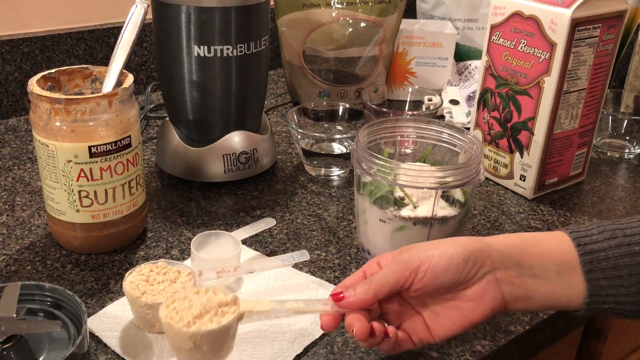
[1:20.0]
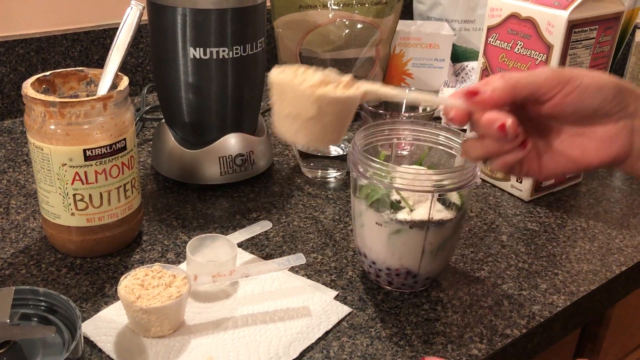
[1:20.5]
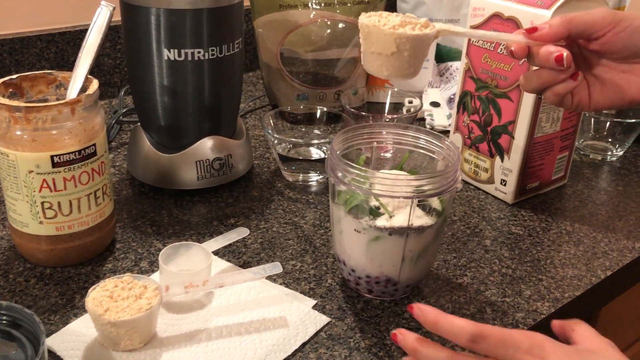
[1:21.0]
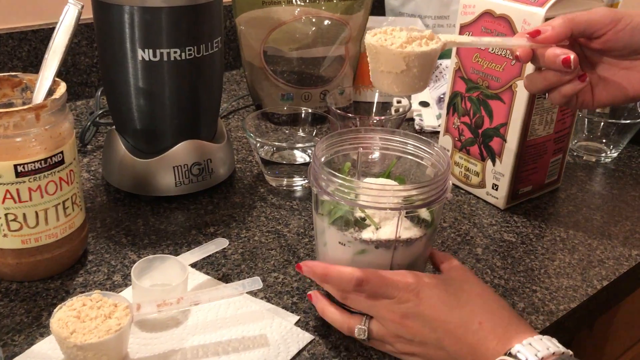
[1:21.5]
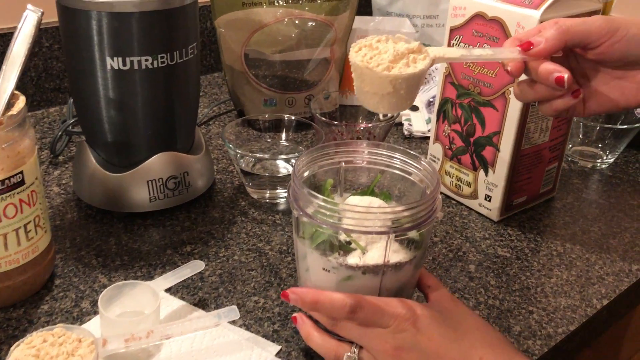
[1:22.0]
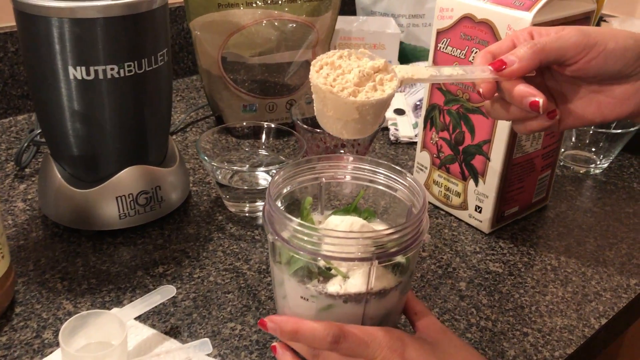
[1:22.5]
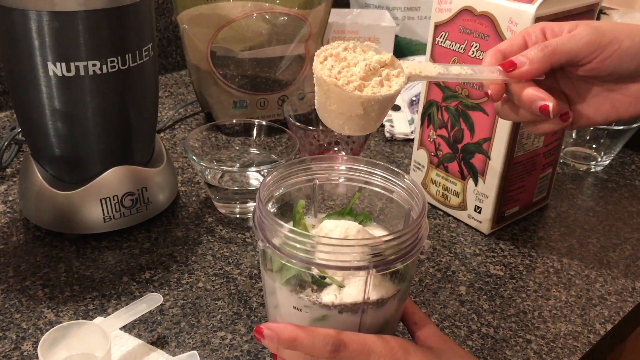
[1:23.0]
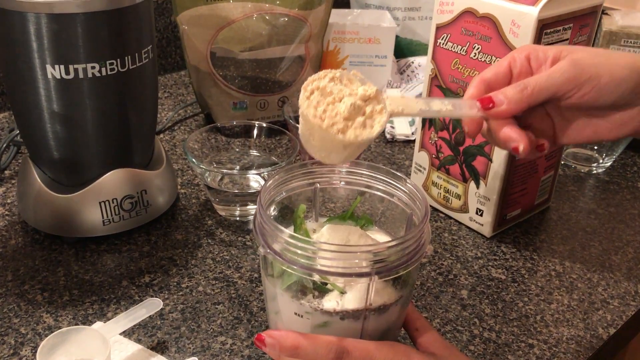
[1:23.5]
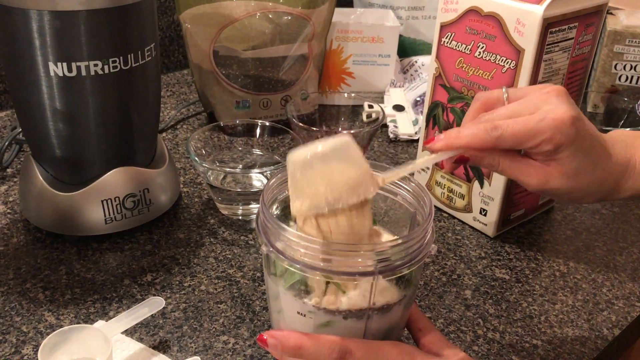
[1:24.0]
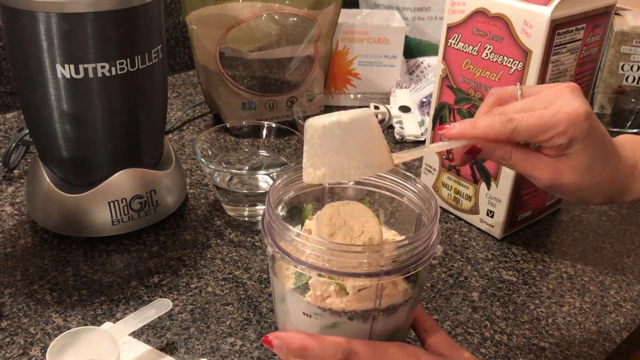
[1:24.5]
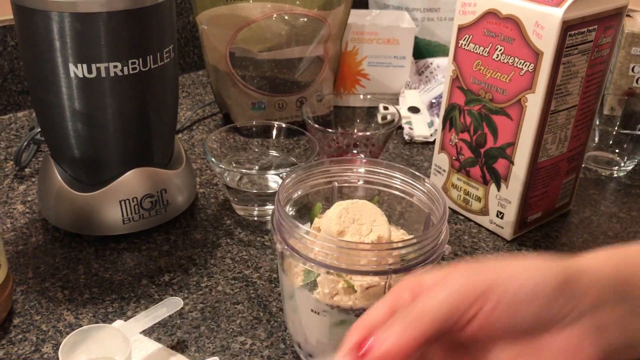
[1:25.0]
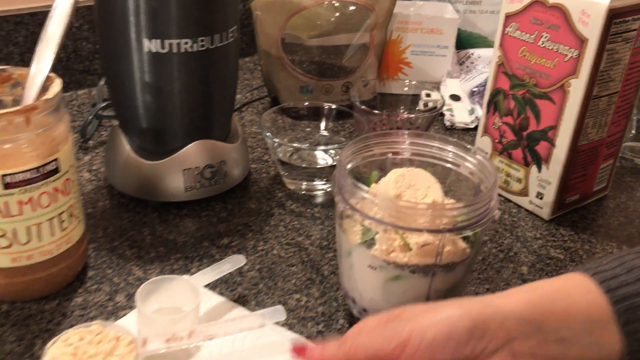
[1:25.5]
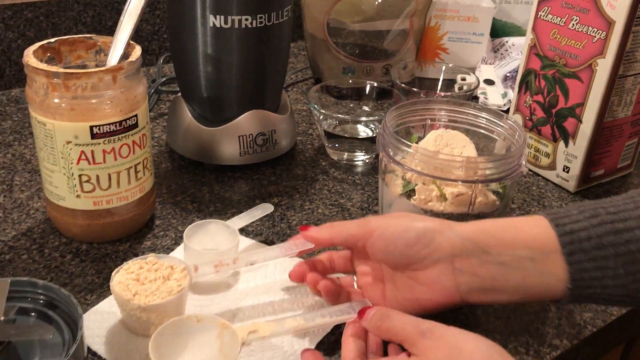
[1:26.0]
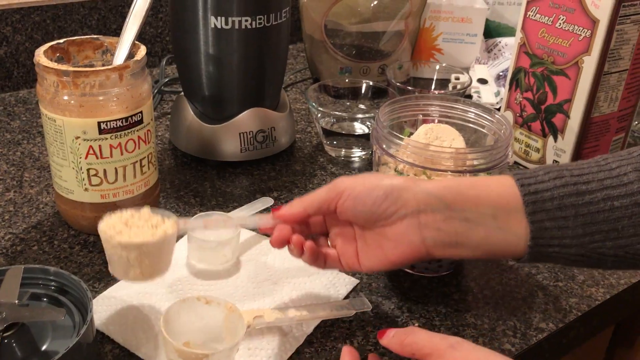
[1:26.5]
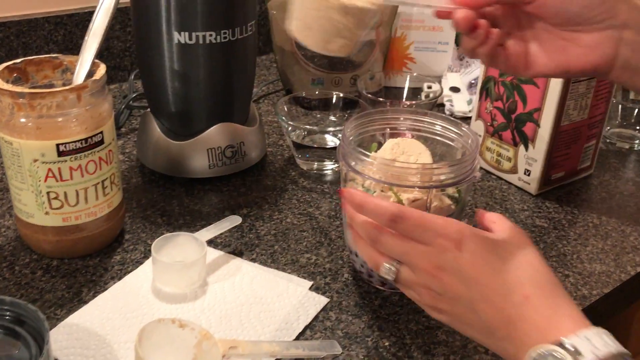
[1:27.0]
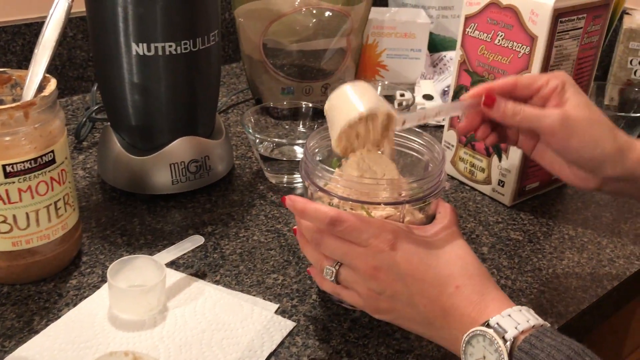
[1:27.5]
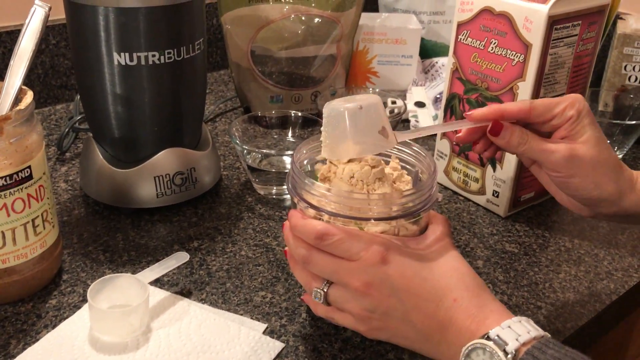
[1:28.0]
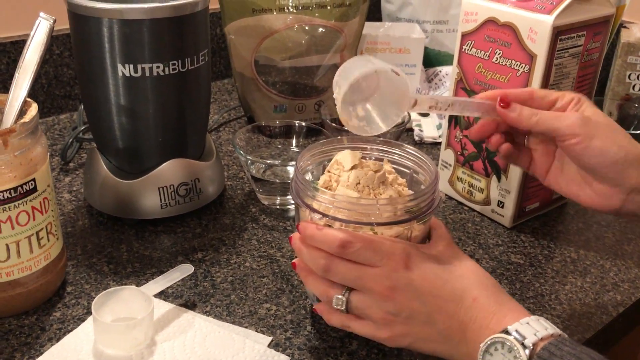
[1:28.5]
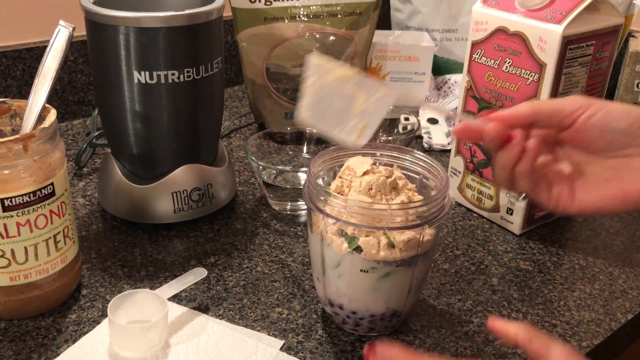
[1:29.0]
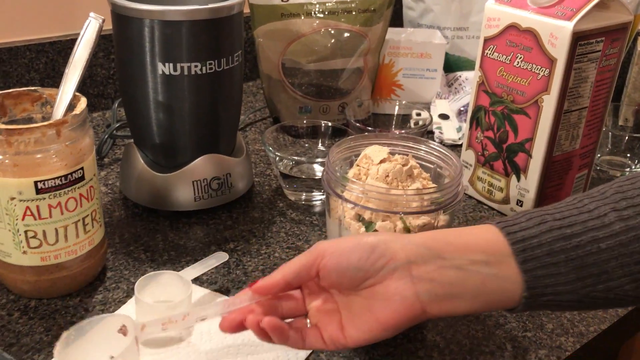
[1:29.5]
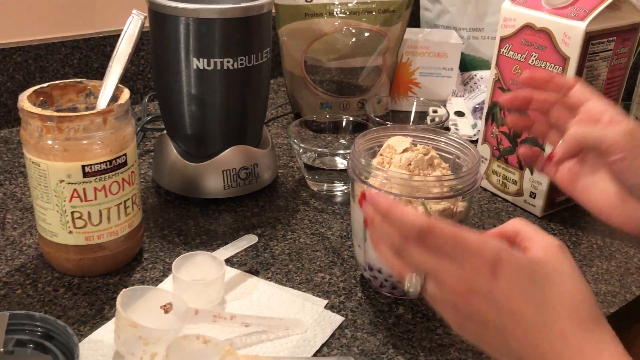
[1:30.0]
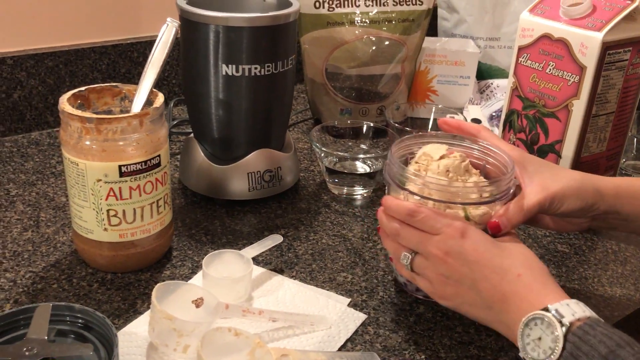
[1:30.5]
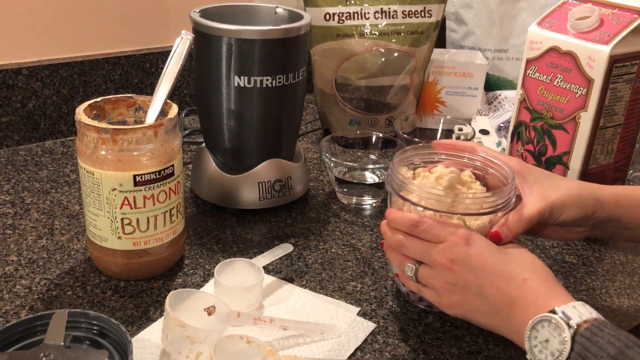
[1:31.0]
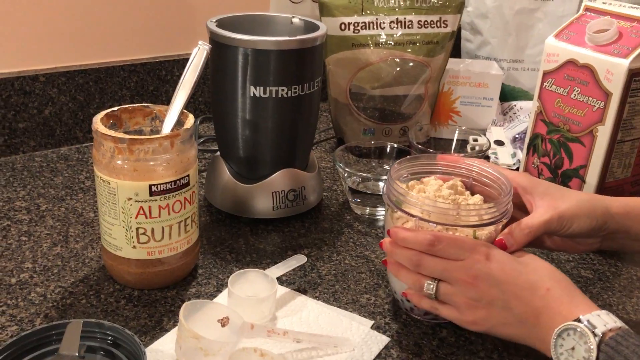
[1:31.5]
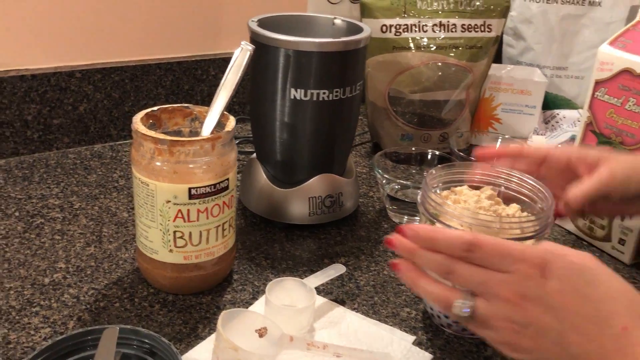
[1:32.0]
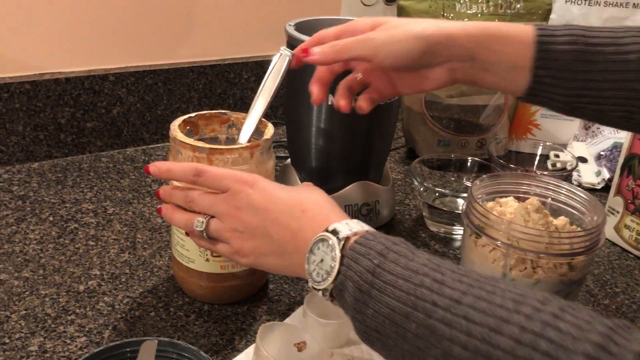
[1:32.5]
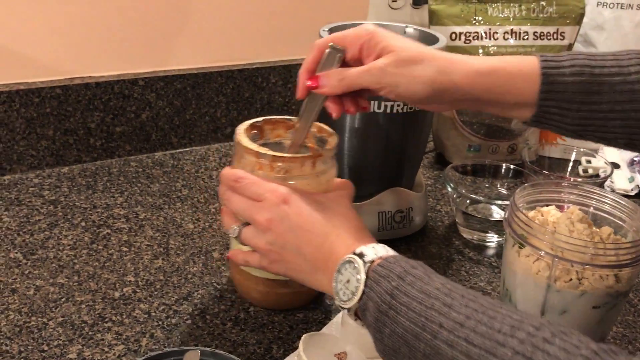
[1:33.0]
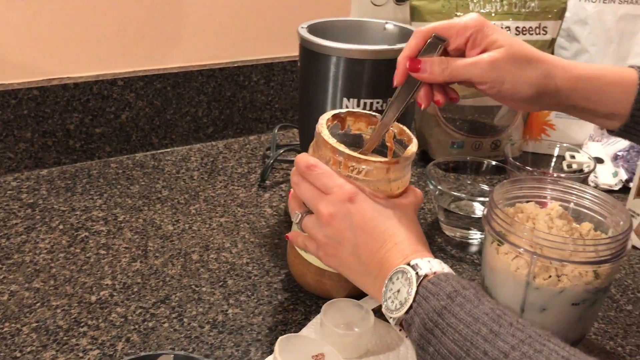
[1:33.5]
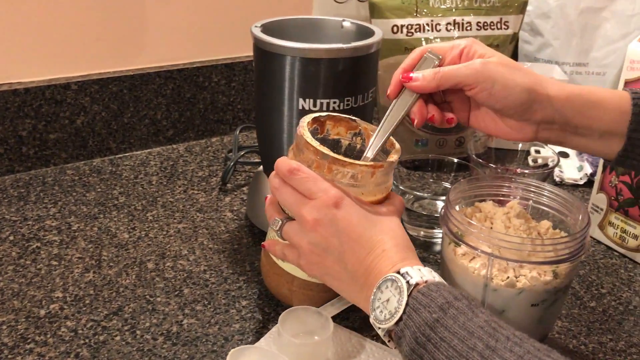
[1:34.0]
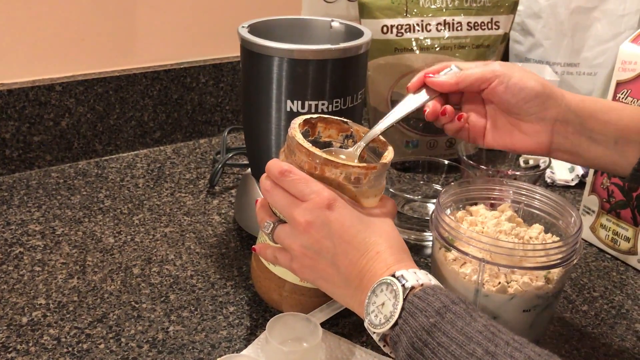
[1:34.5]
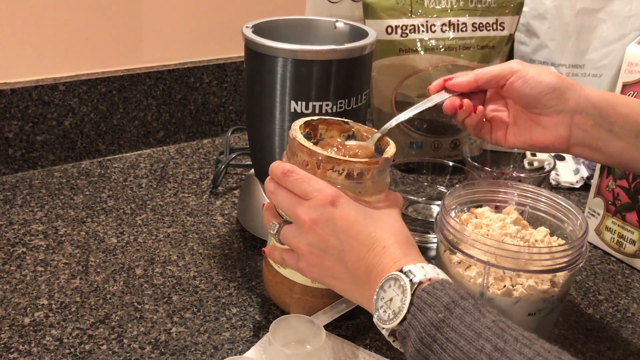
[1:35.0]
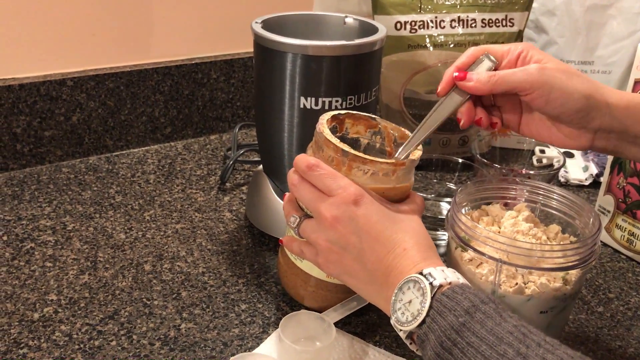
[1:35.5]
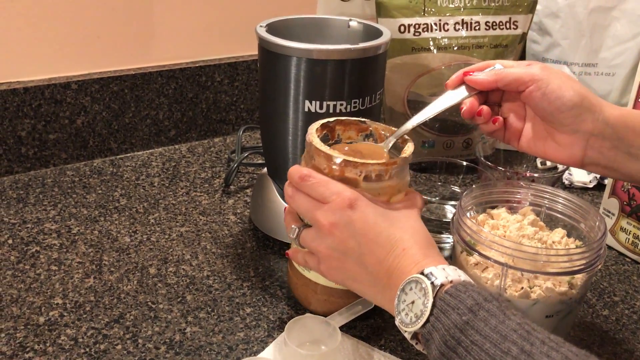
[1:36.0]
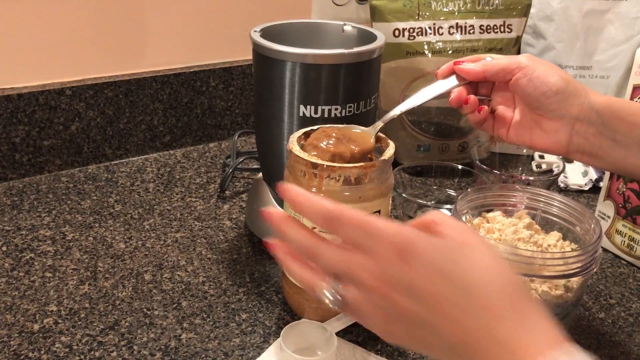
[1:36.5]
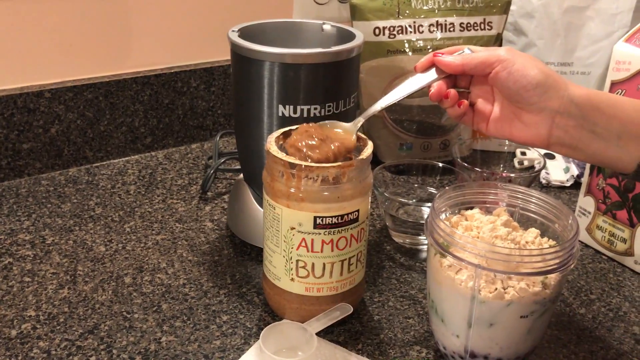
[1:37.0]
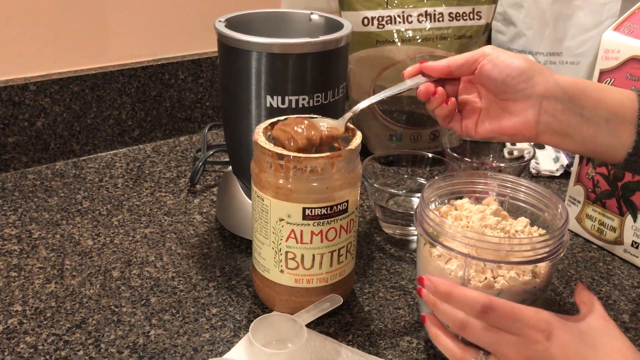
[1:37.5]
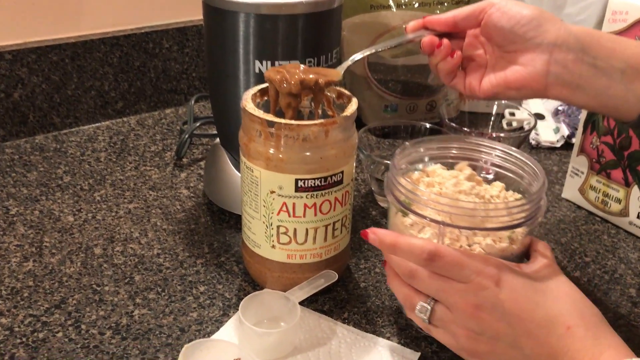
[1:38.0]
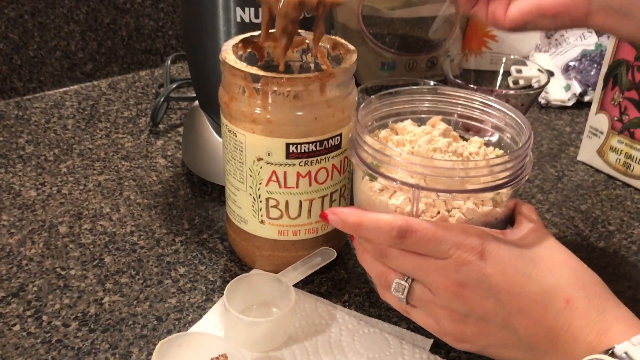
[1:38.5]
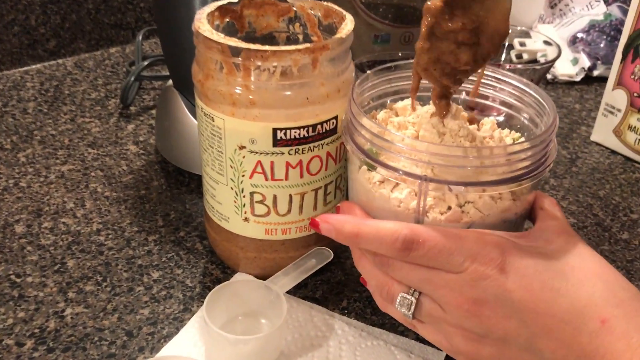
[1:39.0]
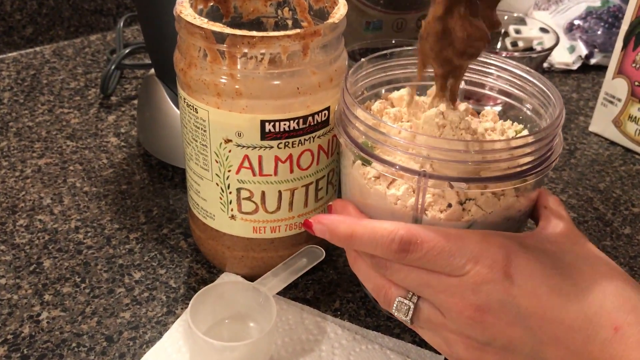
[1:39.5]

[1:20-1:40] Only the woman's hands are shown as she continues adding ingredients to the jar holding the leaves, almond beverage, berry-like things, chia seeds and the sachet contents. She adds another full measured spoon into the jar, then a third one, covering everything in the jar. She then takes the almond butter, which has a spoon already in it, and adds a not very full spoon of almond butter into the jar. The almond butter jar has bigger words on it, with "almond" written in red and "butter" in brown. The ingredients she added are in different measurements: a small measuring cup, followed by the next one, and then the bigger one.